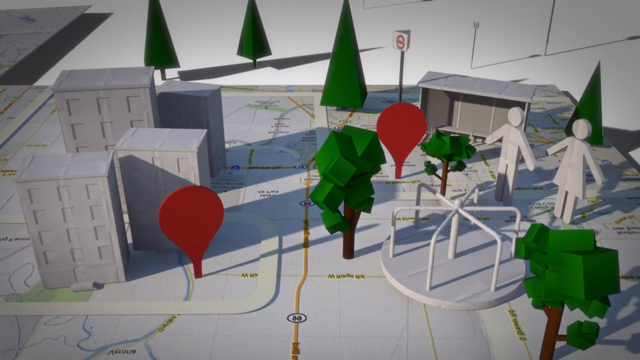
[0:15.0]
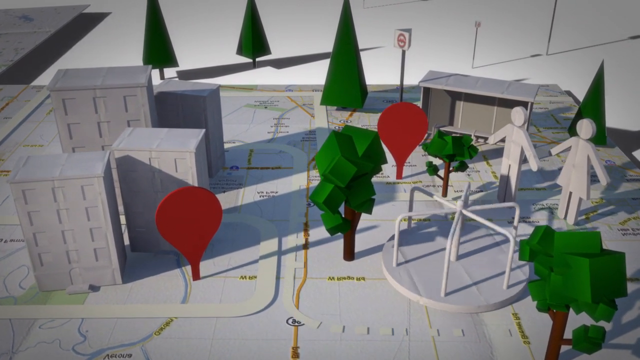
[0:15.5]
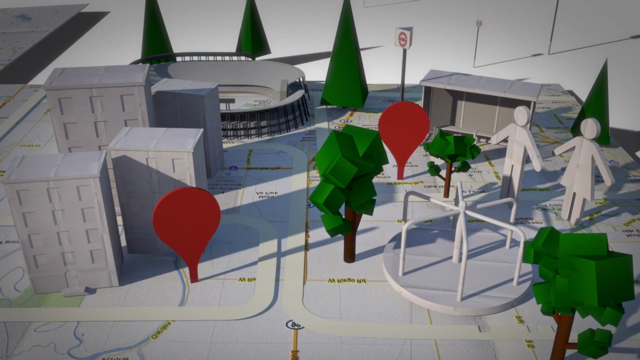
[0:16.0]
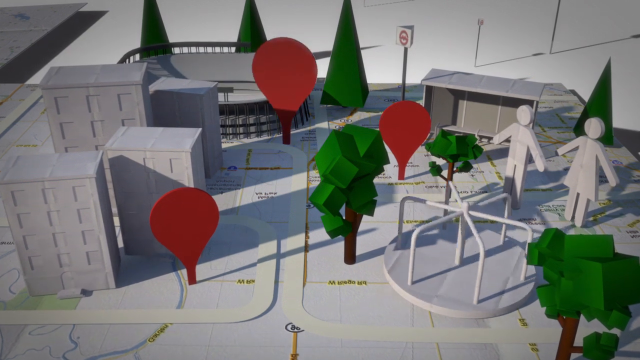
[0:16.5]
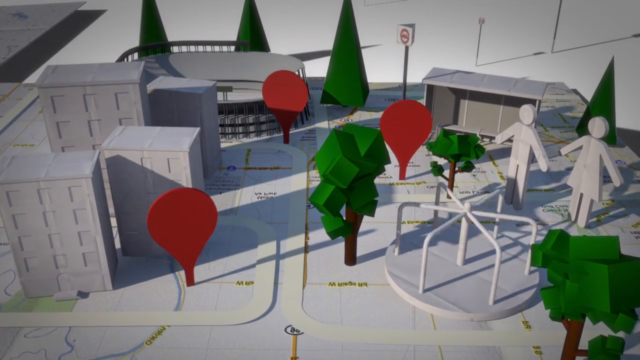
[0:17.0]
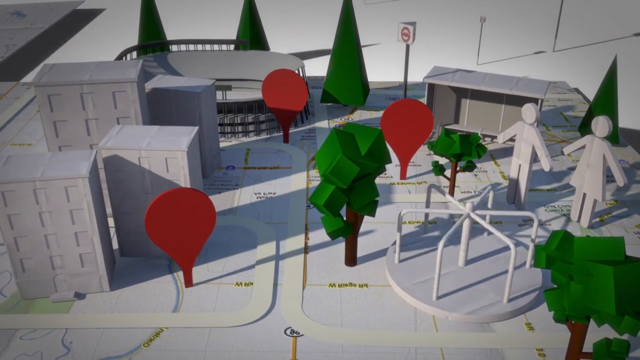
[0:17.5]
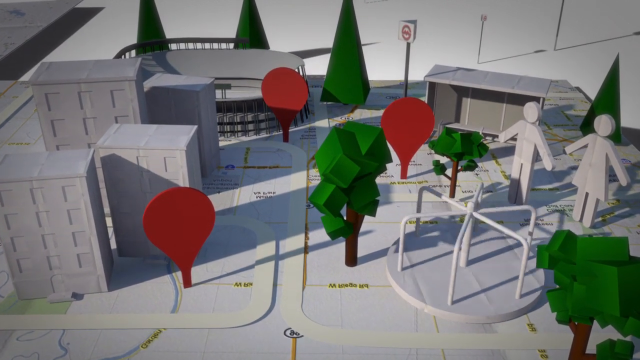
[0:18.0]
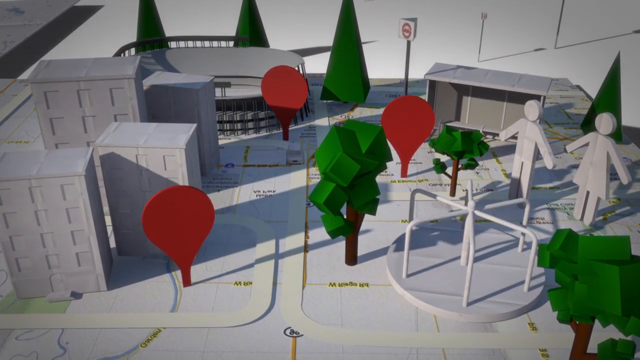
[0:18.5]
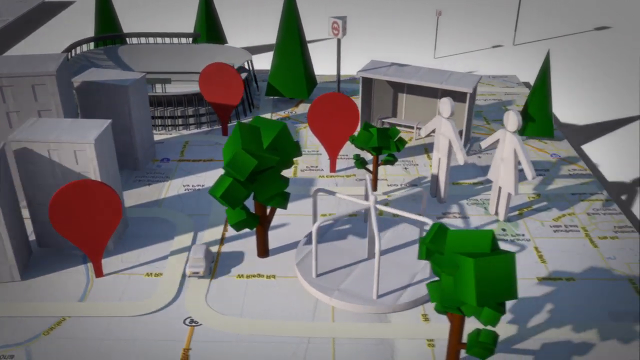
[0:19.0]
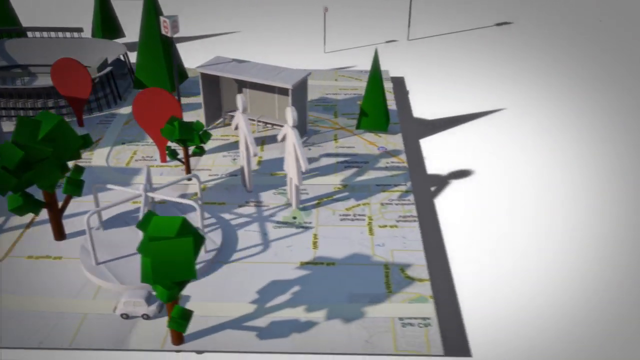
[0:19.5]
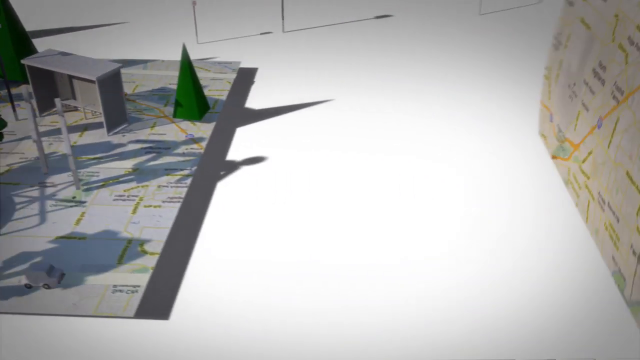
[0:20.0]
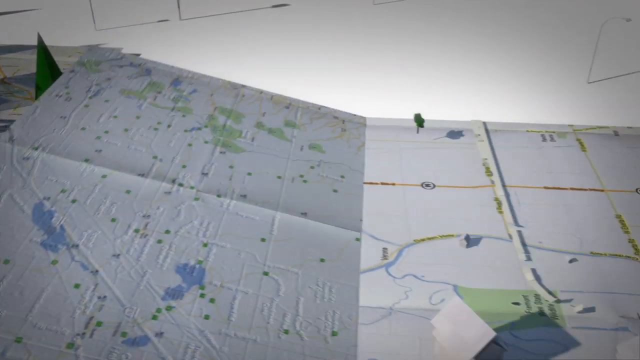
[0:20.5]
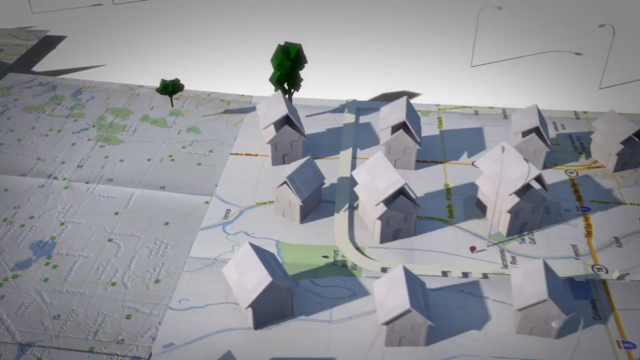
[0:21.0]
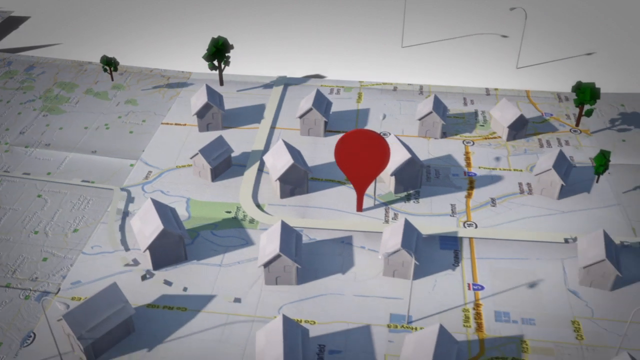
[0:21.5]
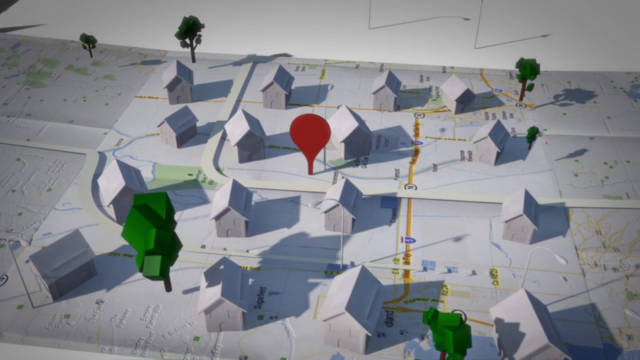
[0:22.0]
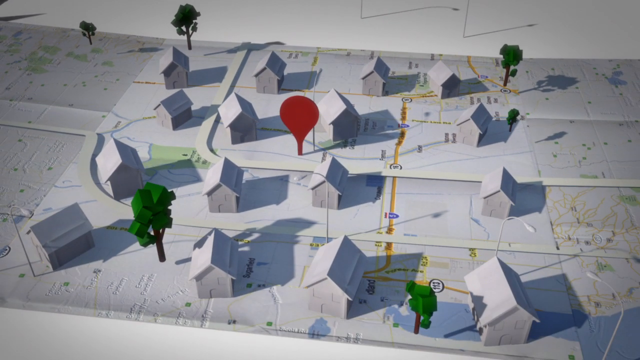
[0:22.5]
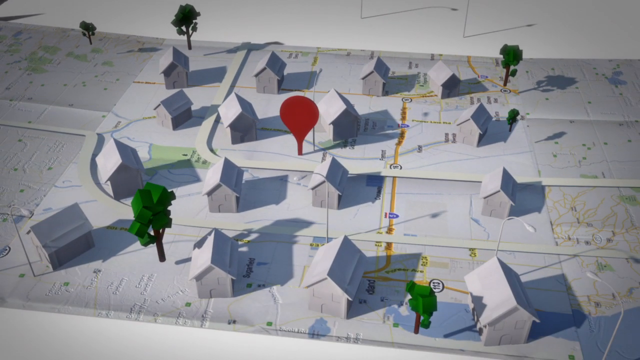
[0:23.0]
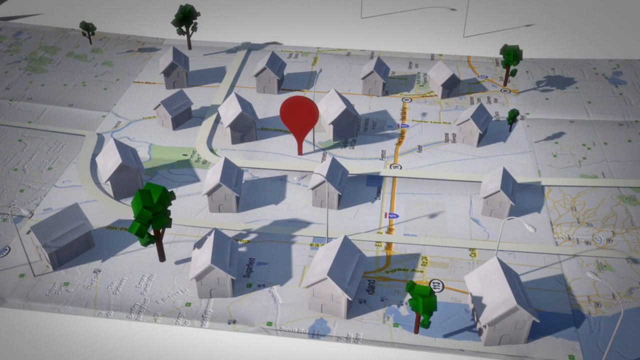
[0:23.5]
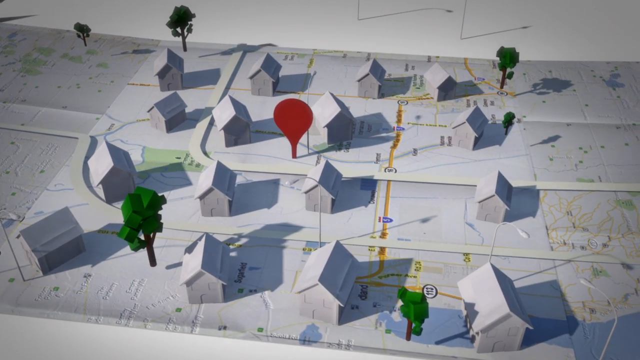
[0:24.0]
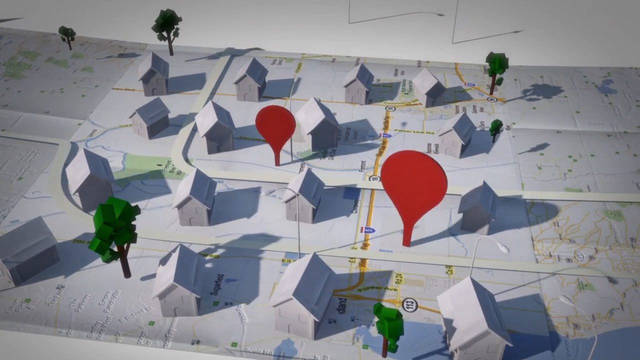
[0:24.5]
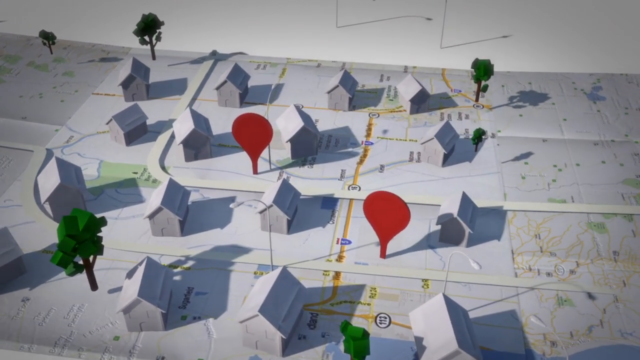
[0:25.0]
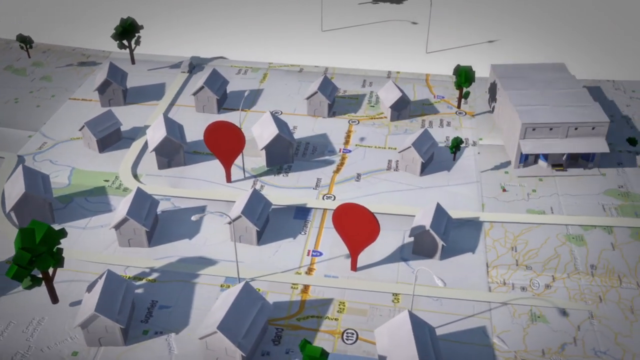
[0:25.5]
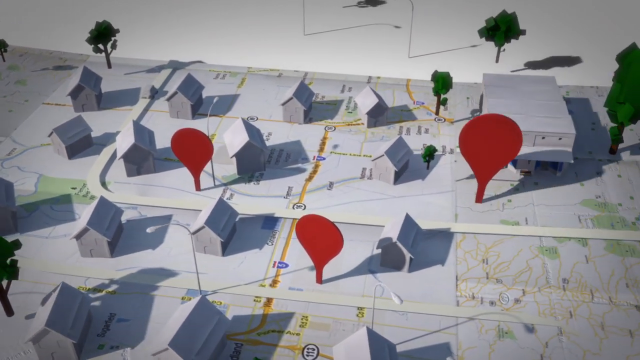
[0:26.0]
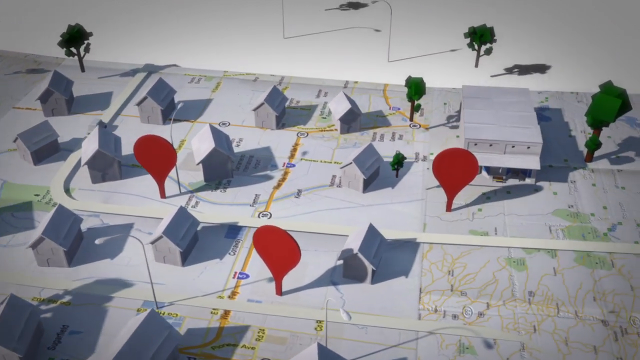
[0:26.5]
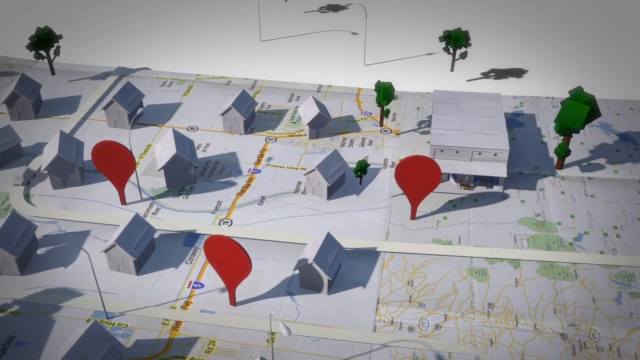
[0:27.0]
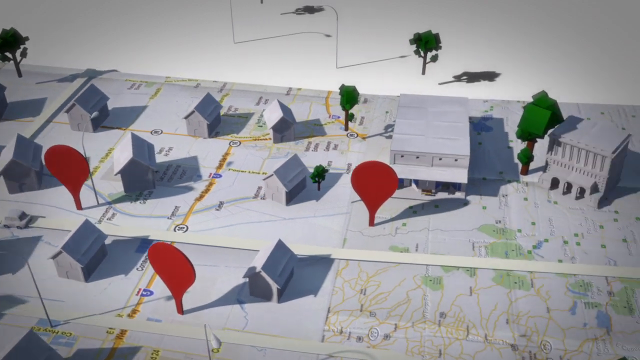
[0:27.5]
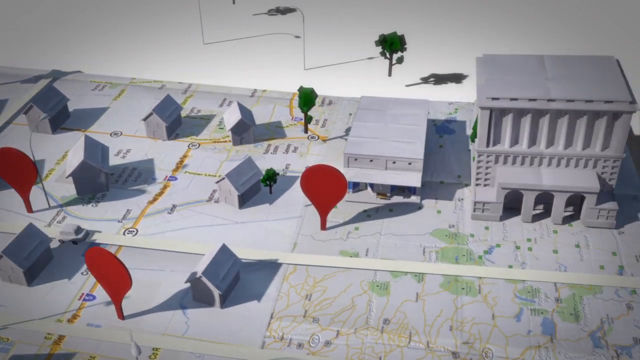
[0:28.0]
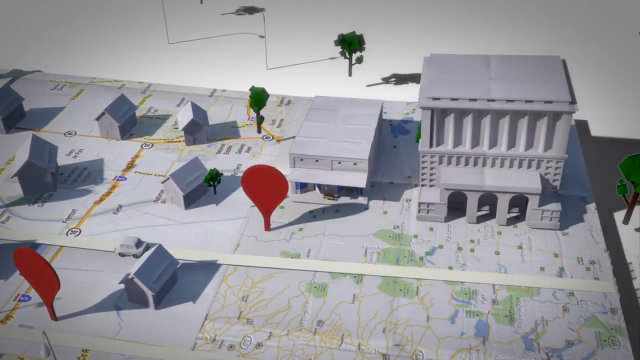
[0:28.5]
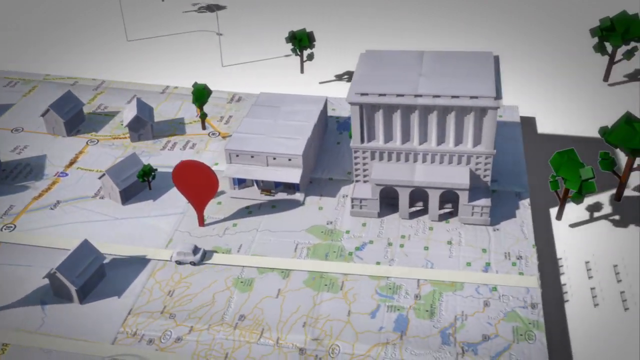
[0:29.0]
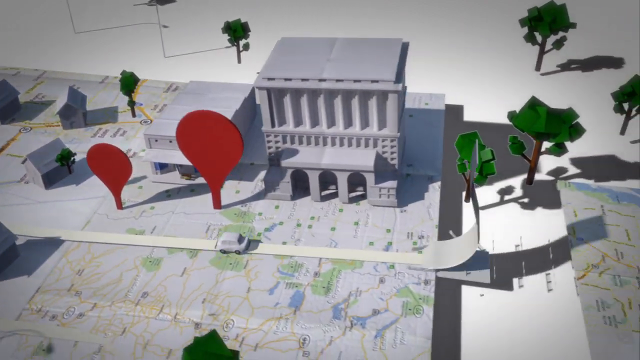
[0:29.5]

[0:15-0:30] The map unfolds, and what looks like part of a playground appears, with a merry-go-round spinning in a circle. Most of the graphics on the map are white, and the little pinpoints marking different places are red. Green trees sprout up, and little cars move back and forth on the map, with one car driving across a bridge onto another map. Various maps unfold with these icons and graphics sprouting up on them, all in 3D.